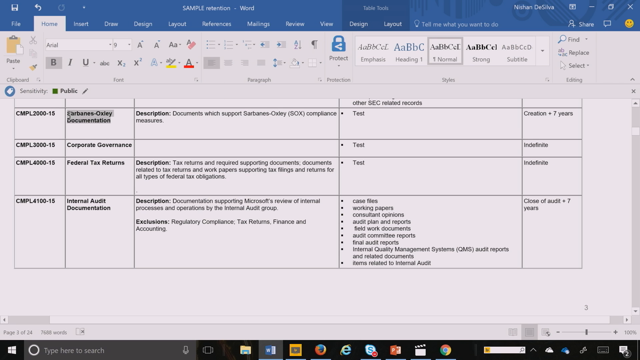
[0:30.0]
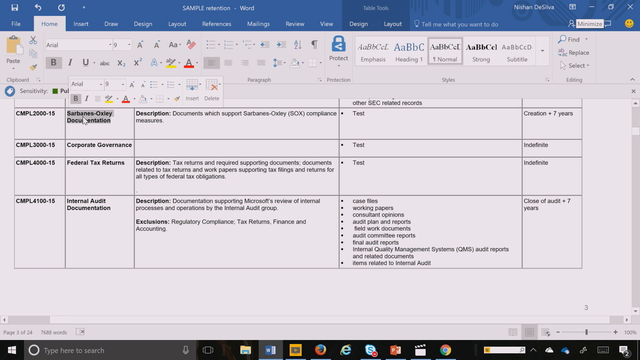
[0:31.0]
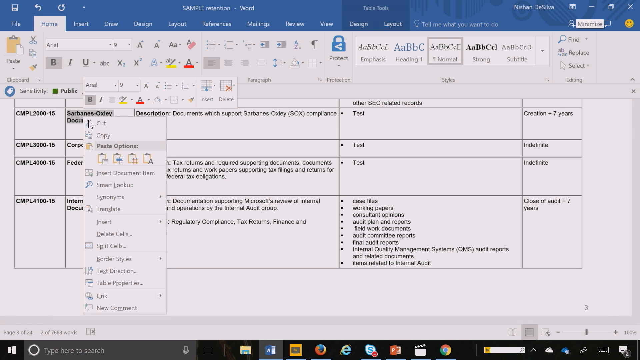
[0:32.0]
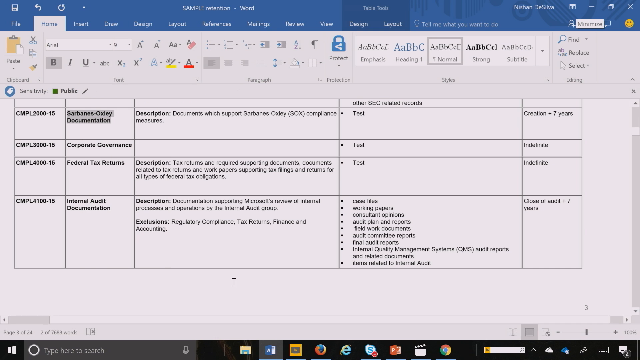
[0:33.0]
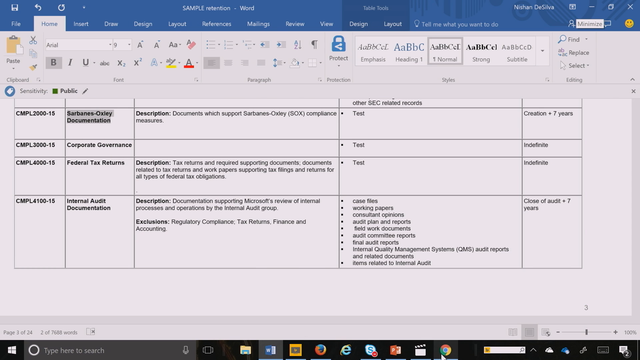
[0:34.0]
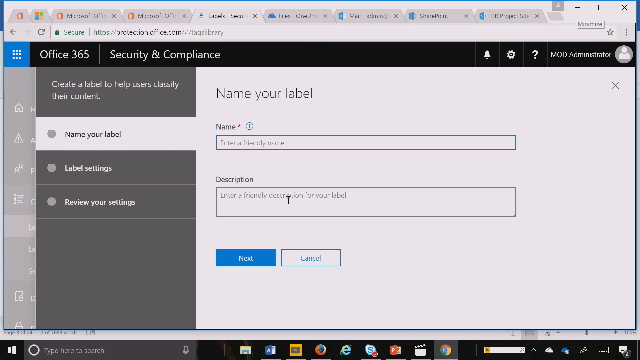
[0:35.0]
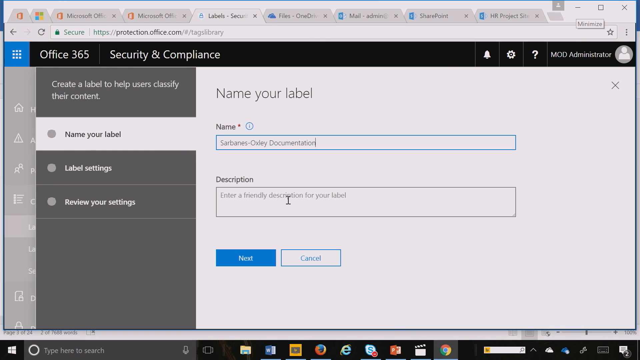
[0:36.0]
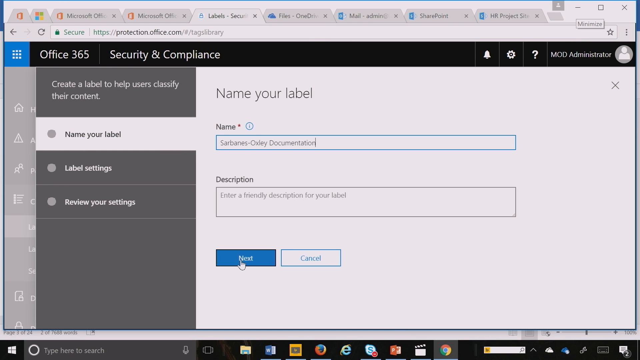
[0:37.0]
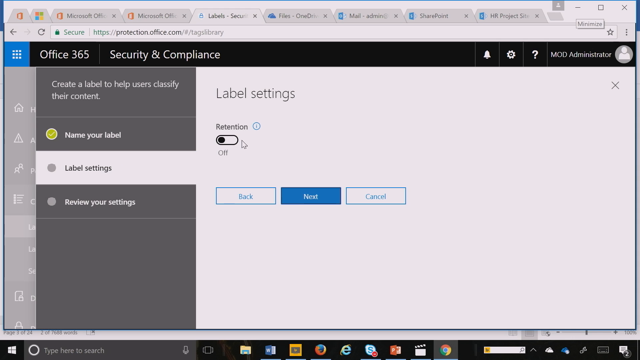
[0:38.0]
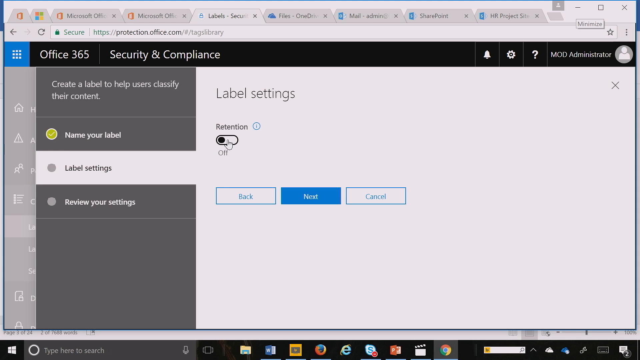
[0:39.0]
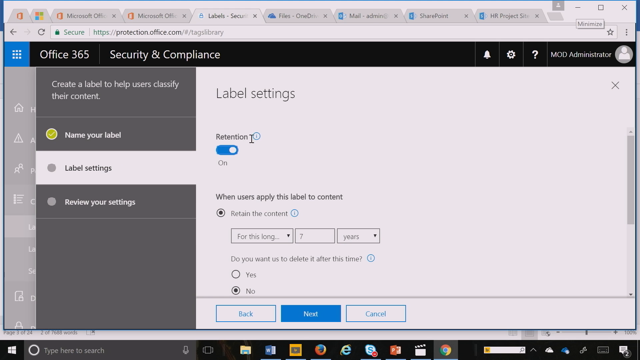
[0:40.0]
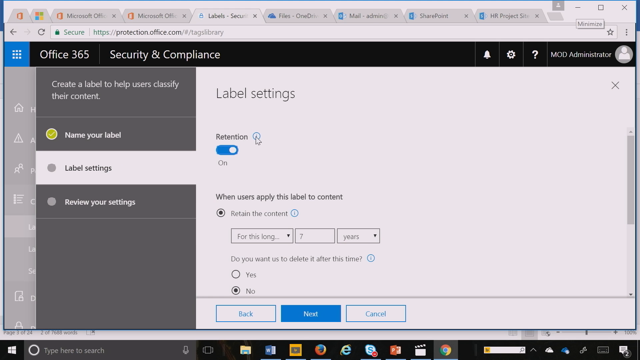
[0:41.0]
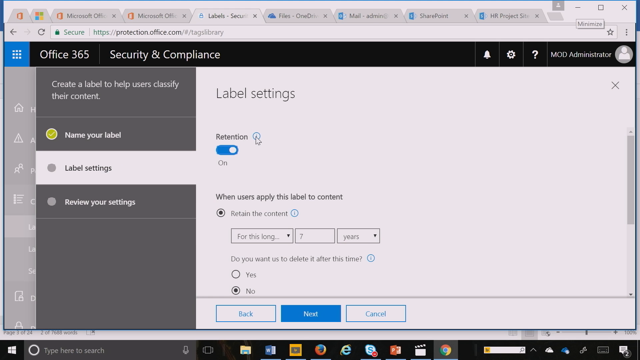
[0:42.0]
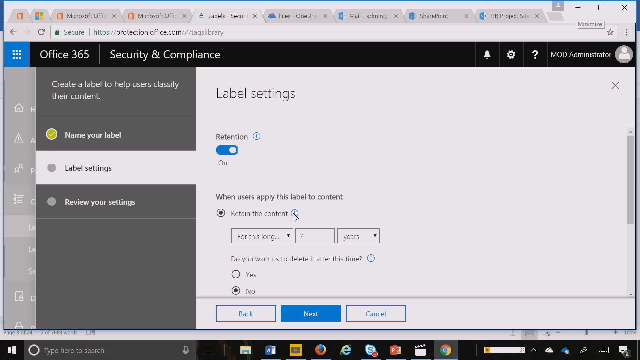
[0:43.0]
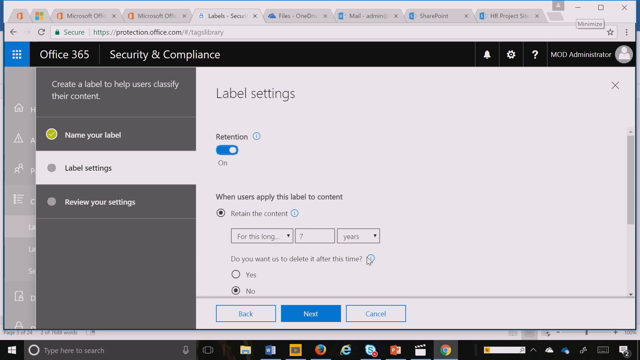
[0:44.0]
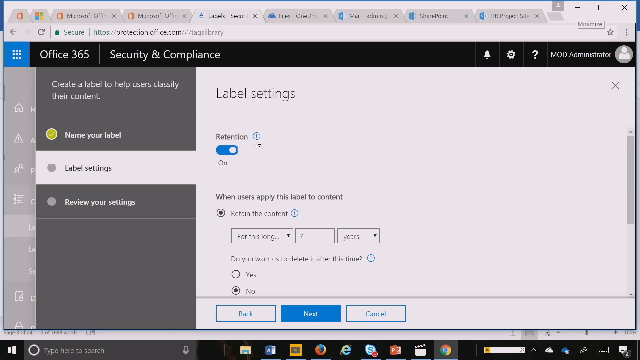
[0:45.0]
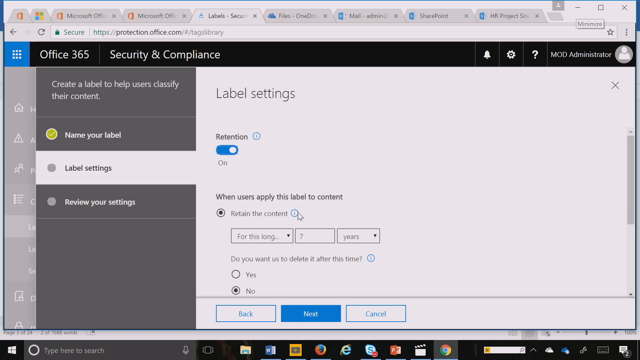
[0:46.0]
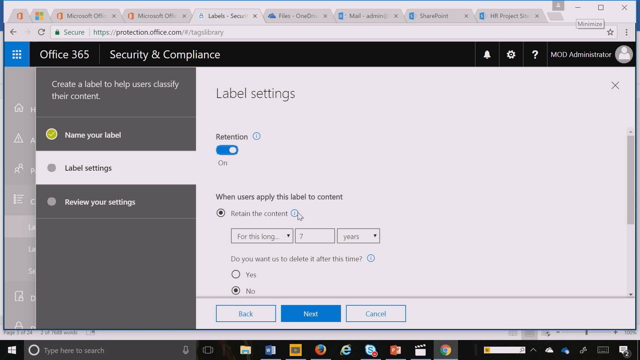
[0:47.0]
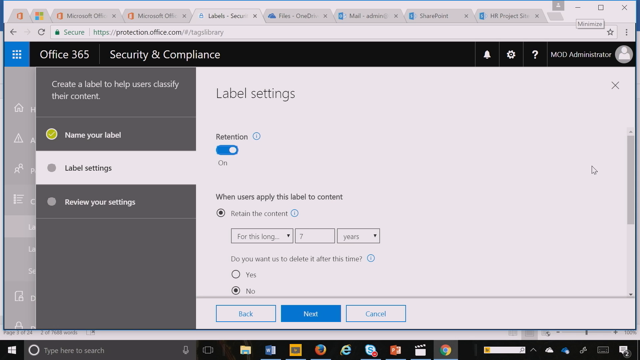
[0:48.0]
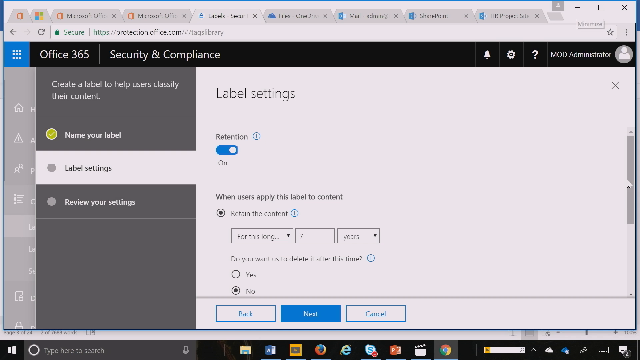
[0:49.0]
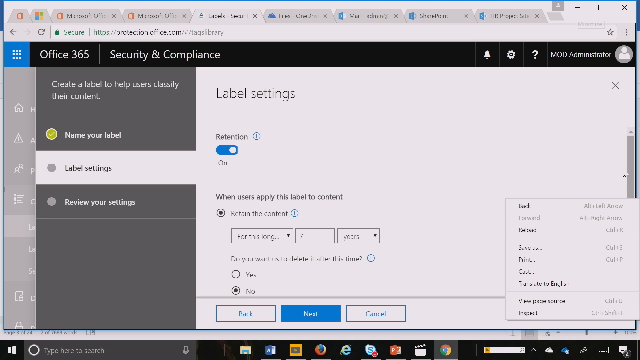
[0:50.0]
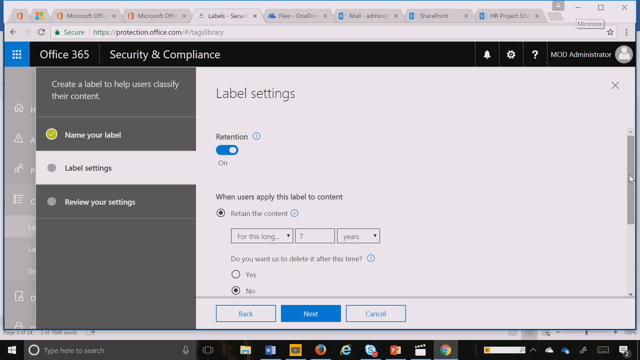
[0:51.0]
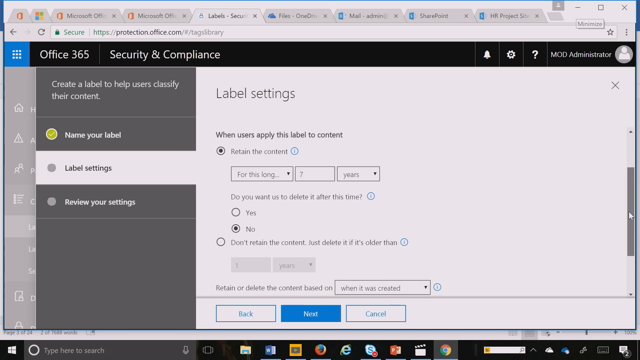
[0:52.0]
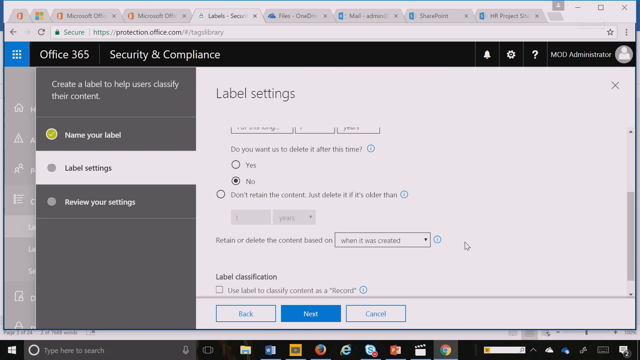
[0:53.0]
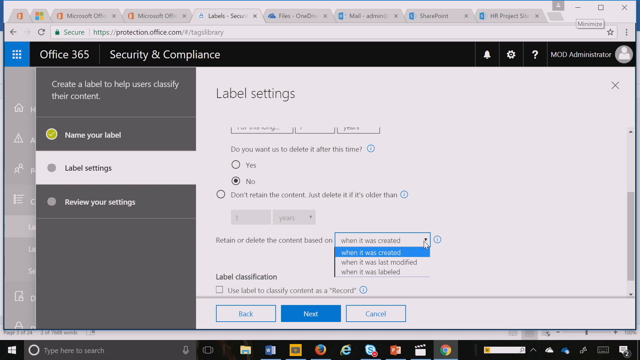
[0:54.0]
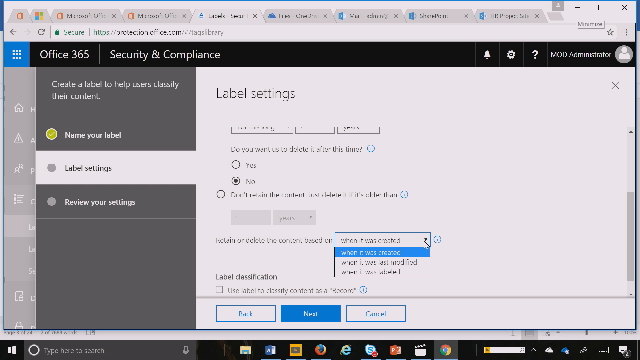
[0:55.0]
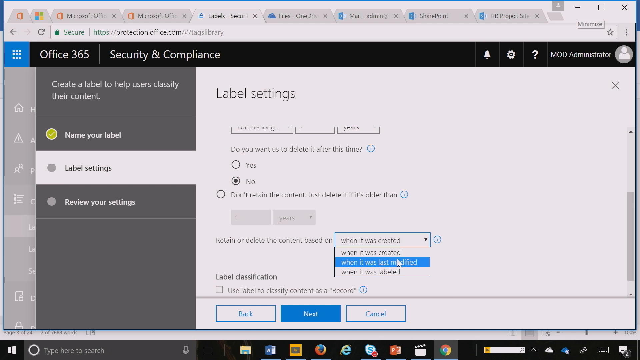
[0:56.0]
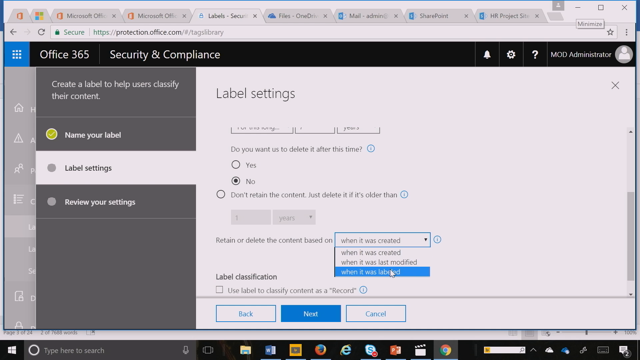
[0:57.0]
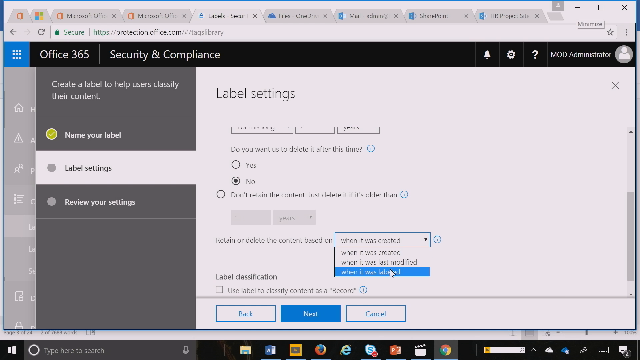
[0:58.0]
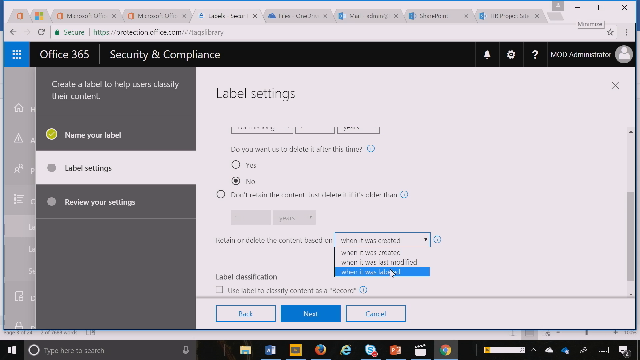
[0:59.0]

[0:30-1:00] A computer screen shows what is sort of a chart with text on it. A cursor is over some of the text, which is highlighted in gray. The person seems to right-click, and a menu pops up; as the cursor moves down the menu, the item it hovers over is highlighted in gray, and then an option is clicked. The screen navigates to another page reading "Office 365 Security and Compliance", where a selected menu item reads "name your label". The label seems to have been named, and the cursor is over a blue button with white text reading "next". The button is clicked, and the screen shows a header reading "label settings". The person seems to be switching it on.